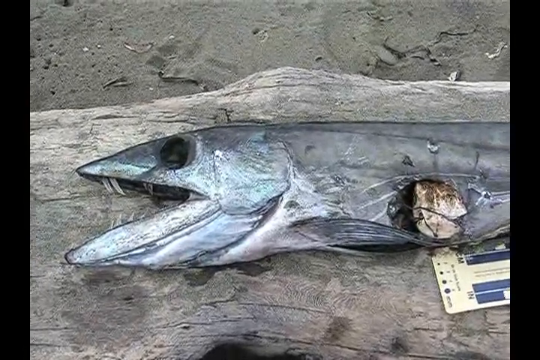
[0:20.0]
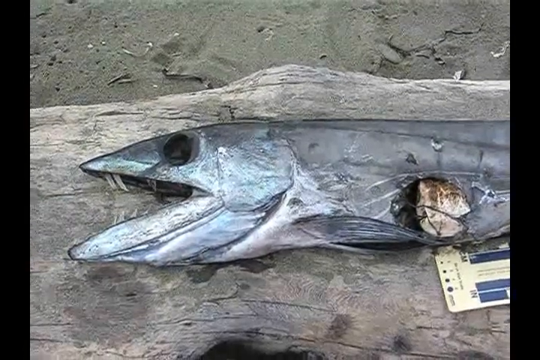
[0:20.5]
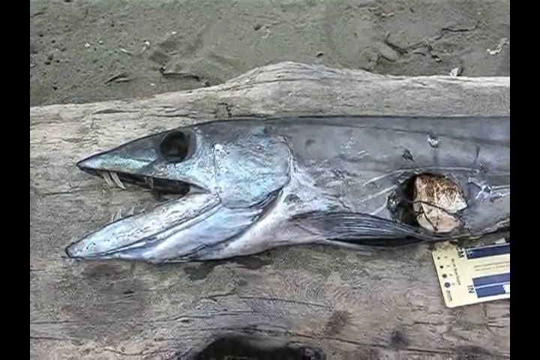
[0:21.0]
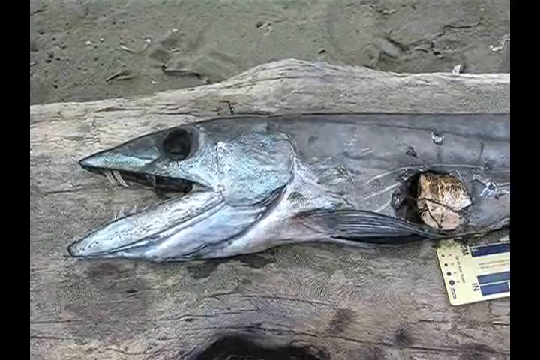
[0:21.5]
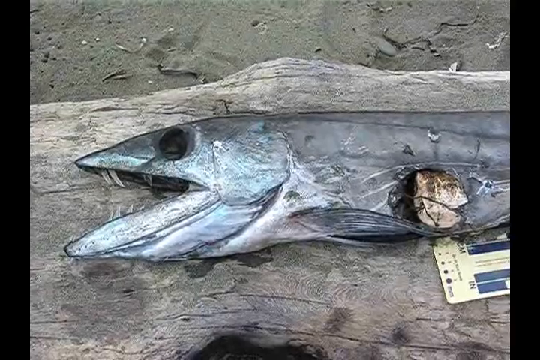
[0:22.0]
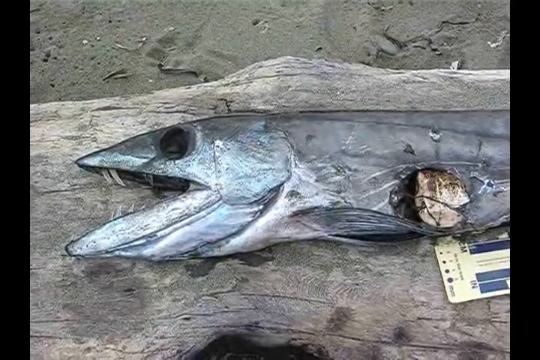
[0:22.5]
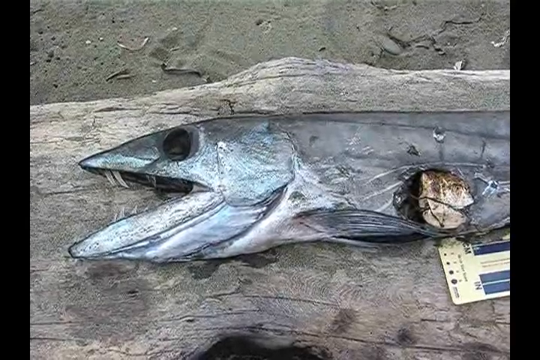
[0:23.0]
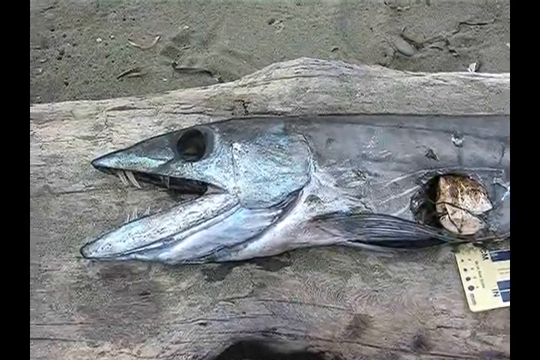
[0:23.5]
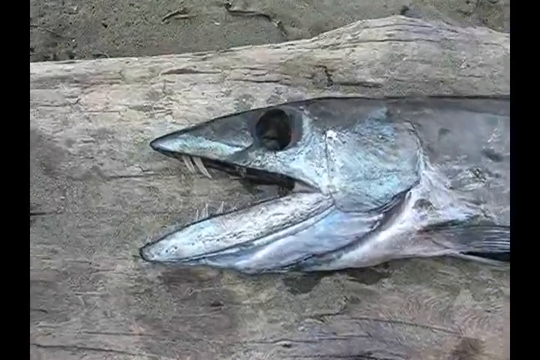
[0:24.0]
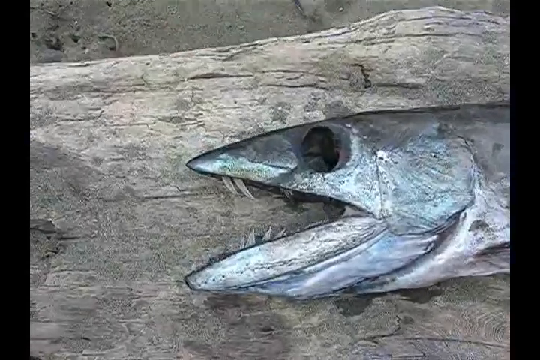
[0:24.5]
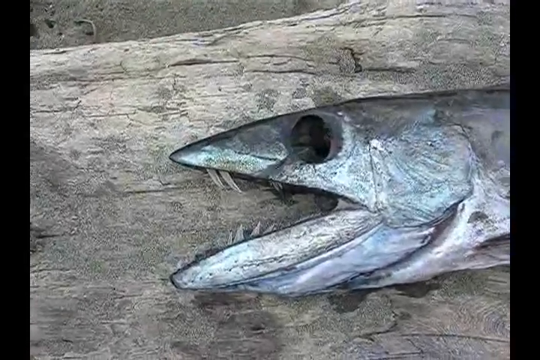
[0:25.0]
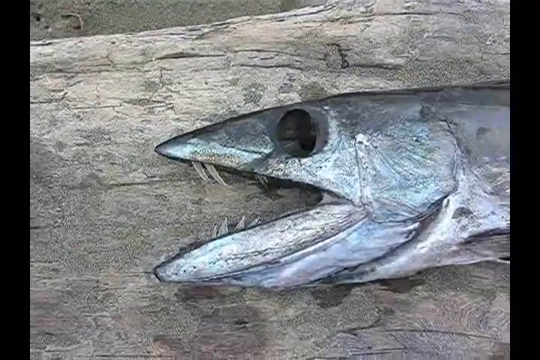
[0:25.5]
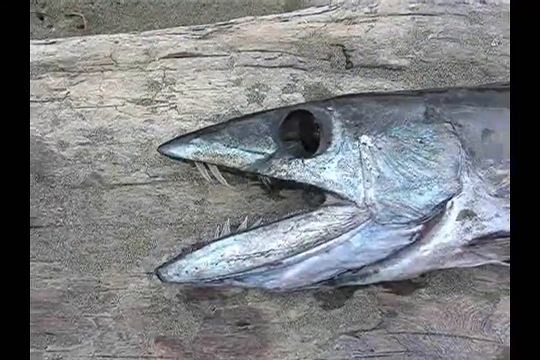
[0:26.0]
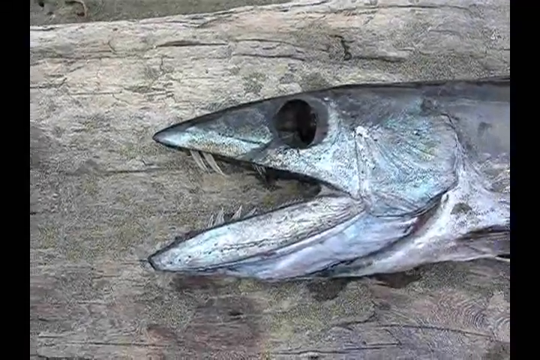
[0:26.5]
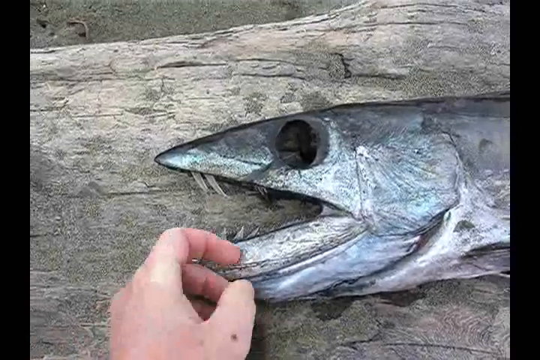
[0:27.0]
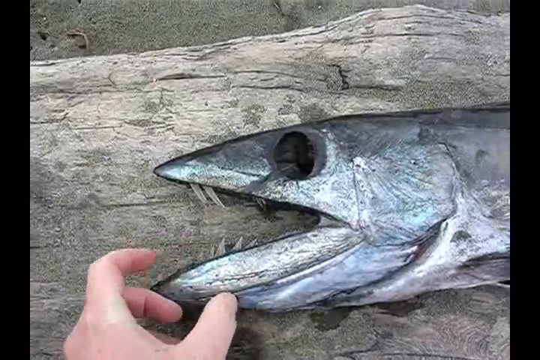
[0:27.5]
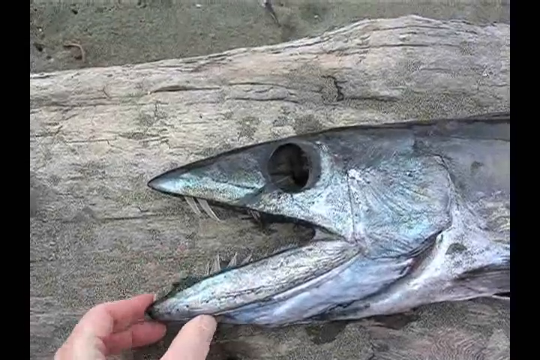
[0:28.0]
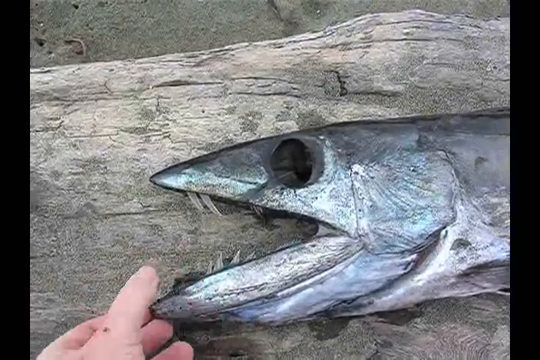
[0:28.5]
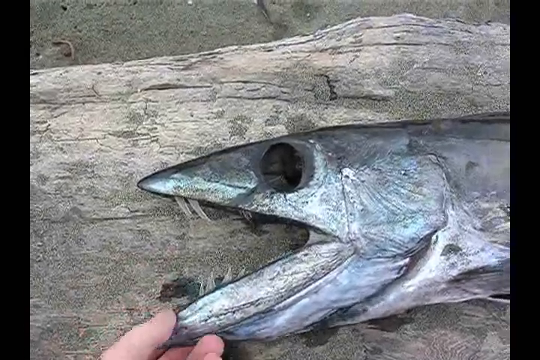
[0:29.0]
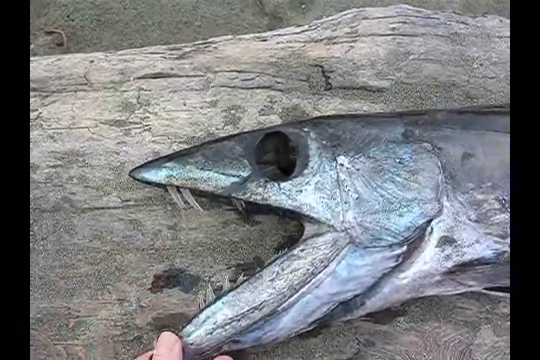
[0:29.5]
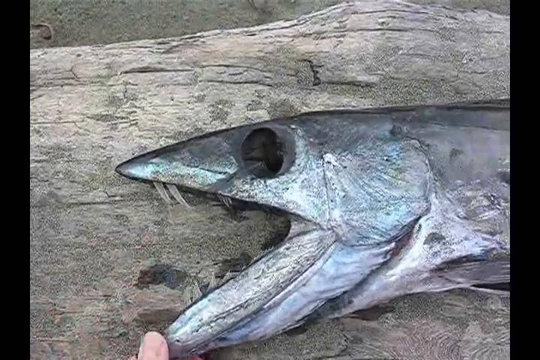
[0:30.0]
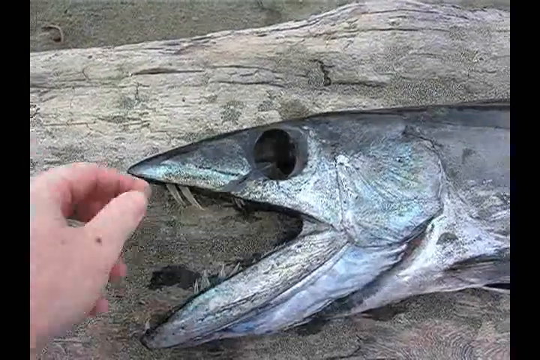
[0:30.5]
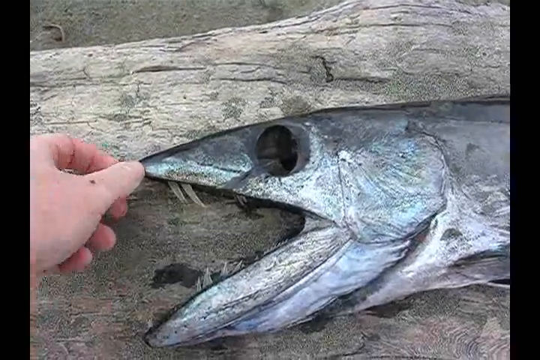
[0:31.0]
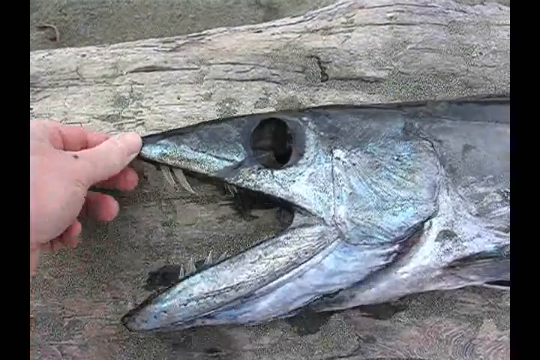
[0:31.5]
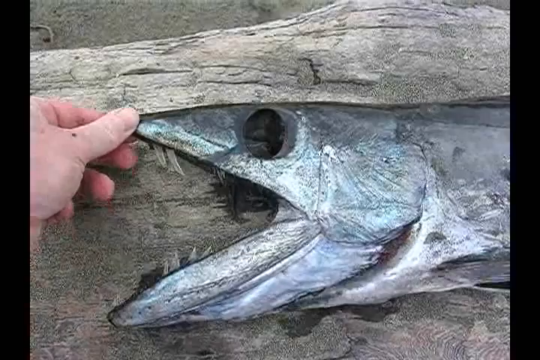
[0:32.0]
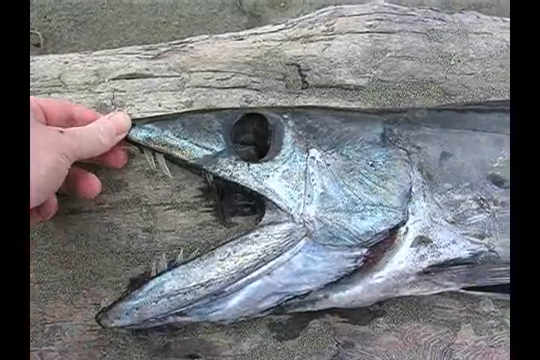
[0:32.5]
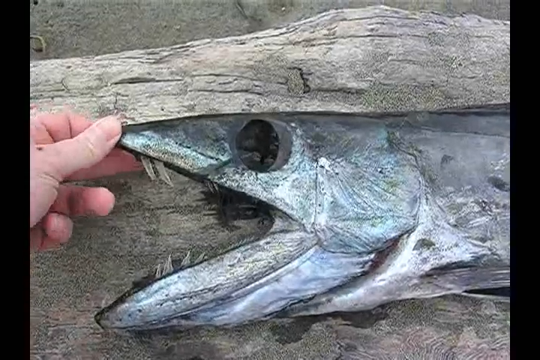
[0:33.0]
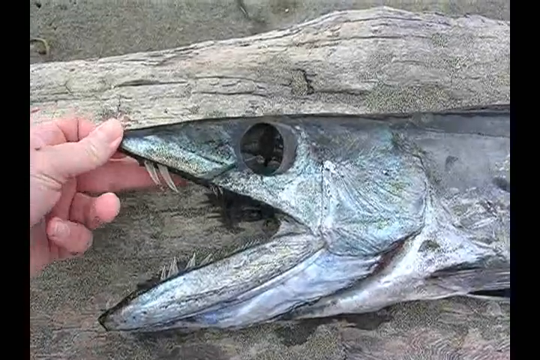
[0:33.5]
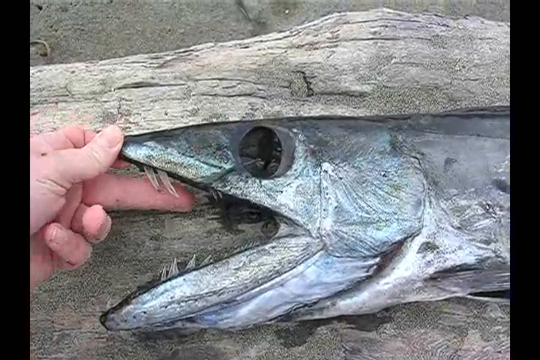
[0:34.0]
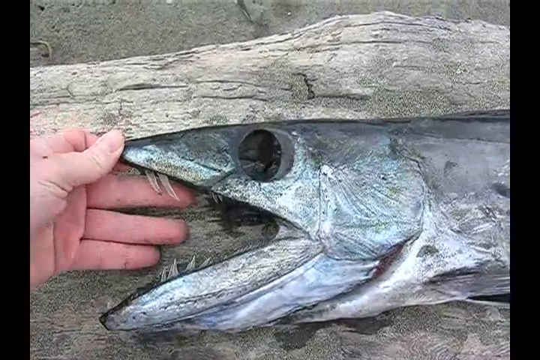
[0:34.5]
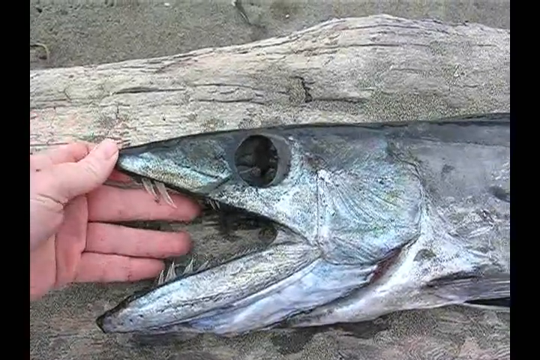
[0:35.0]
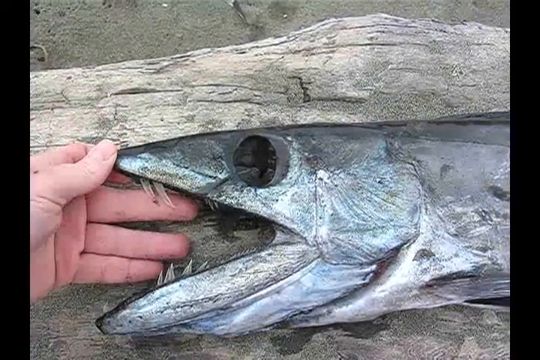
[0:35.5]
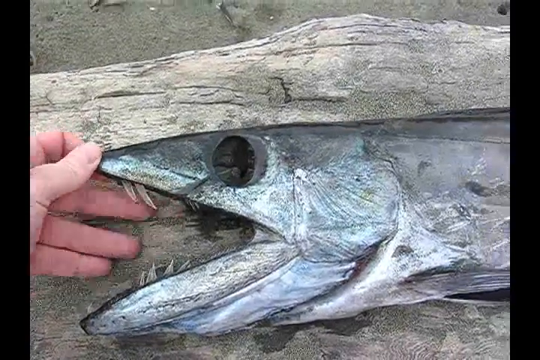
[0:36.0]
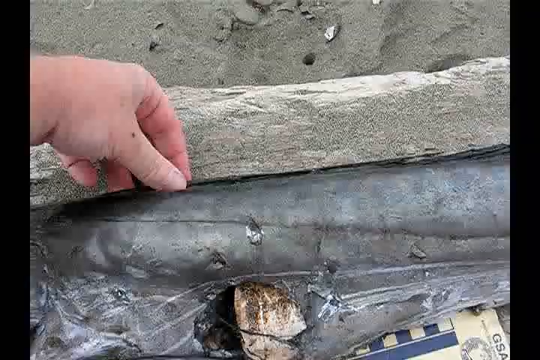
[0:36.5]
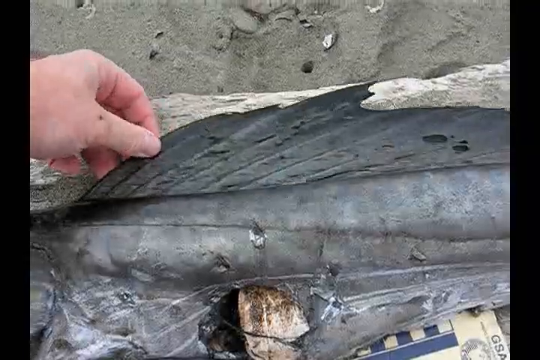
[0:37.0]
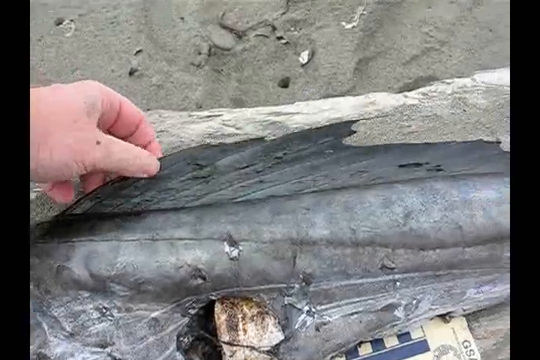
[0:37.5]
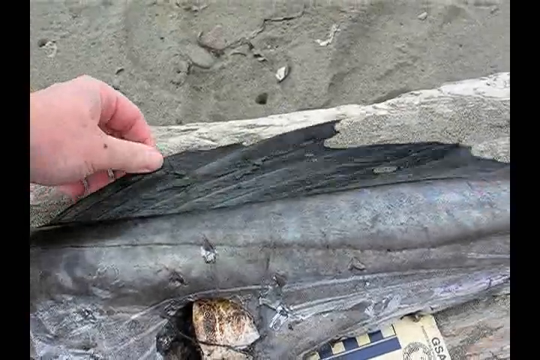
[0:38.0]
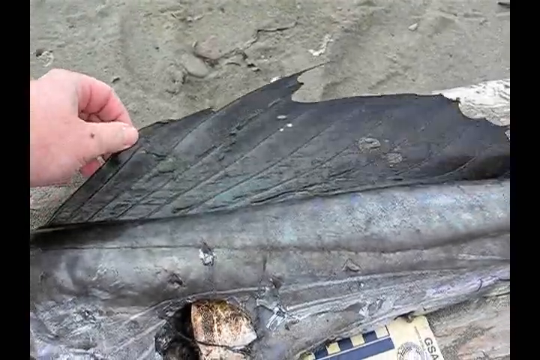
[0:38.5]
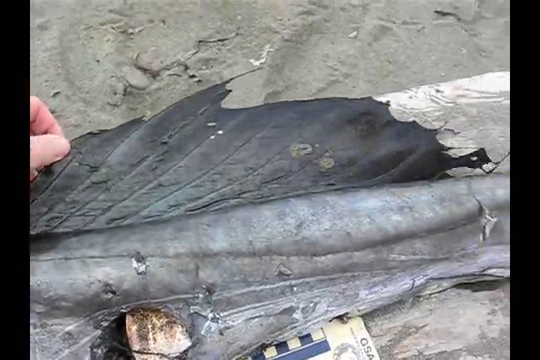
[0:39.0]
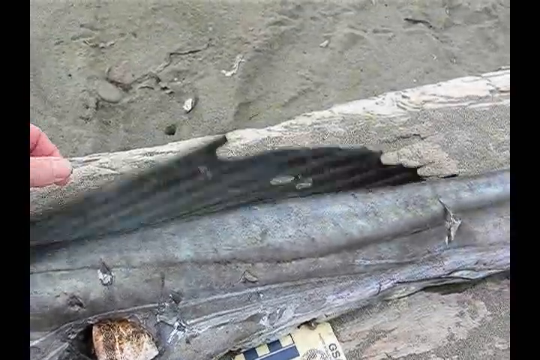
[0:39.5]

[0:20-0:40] A shot shows the dead fish, which has pitch black eyes, many sharp teeth, and what appear to be many scratches and injuries across its body. The fish is lying with its head to the left and seems to be on a log on the beach. Some sort of measuring device or ruler is next to it, but it is unclear exactly what it is. The shaky camera focuses on the first half of the fish, then moves a little closer to the head as a Caucasian hand reaches over to extend the mouth wider, carefully touching and moving different parts of the fish; the fish does not react. The video cuts to the same hand moving the fin, showing a hole in the fin from an injury. The hand carefully lifts the fin up to show it. The fish has an intimidating appearance, and the white hand manipulating it seems to be very careful with it.